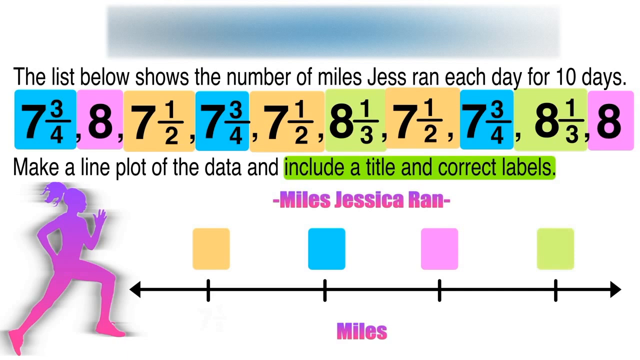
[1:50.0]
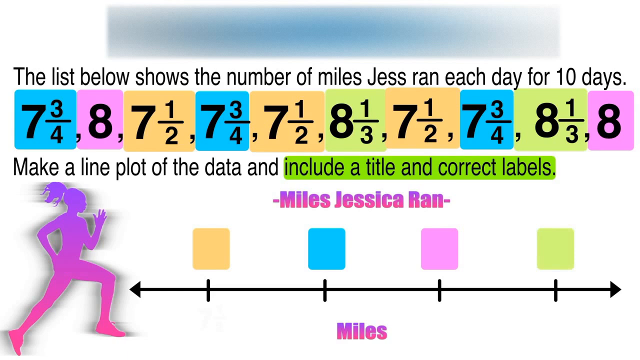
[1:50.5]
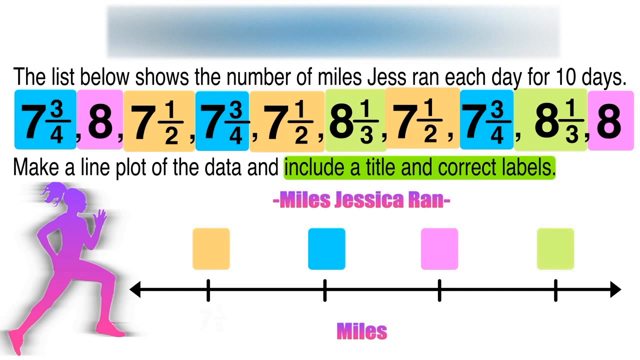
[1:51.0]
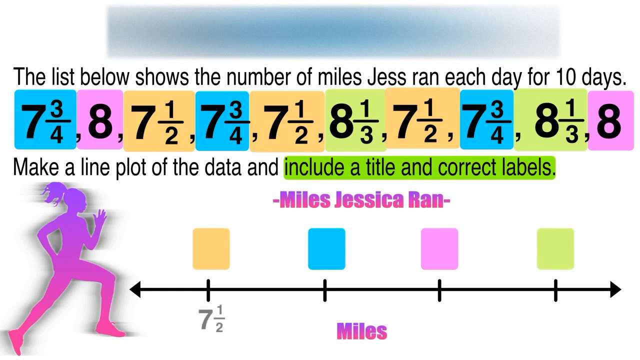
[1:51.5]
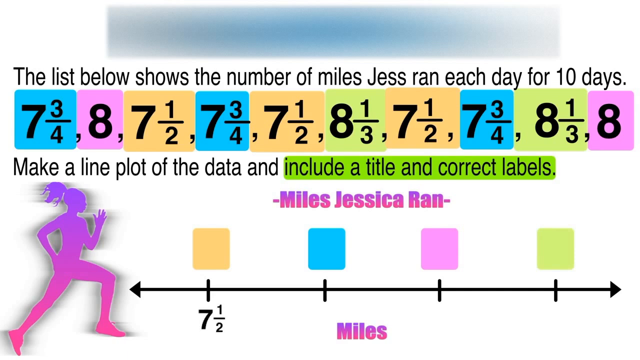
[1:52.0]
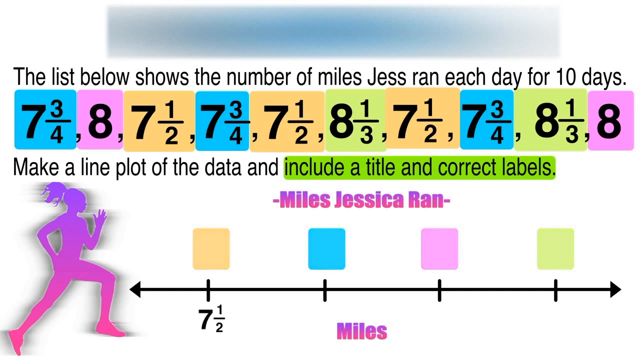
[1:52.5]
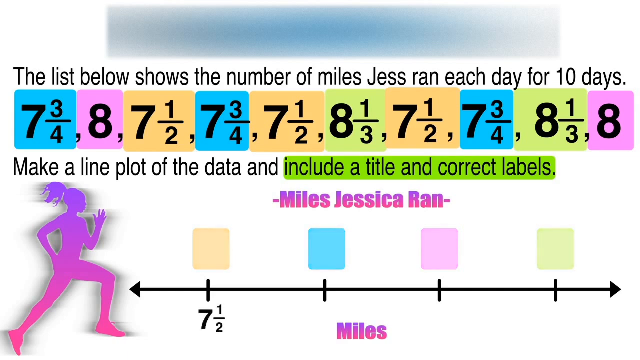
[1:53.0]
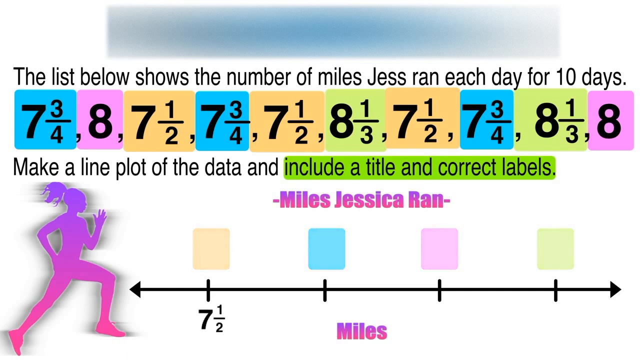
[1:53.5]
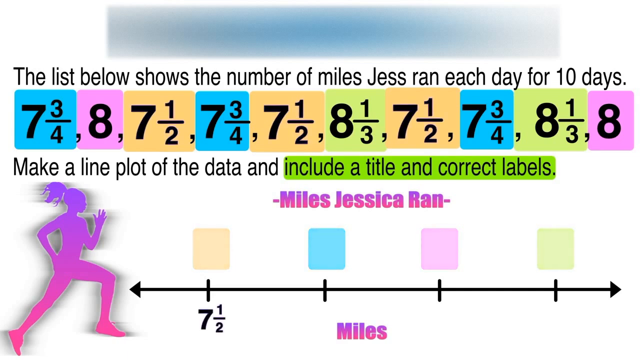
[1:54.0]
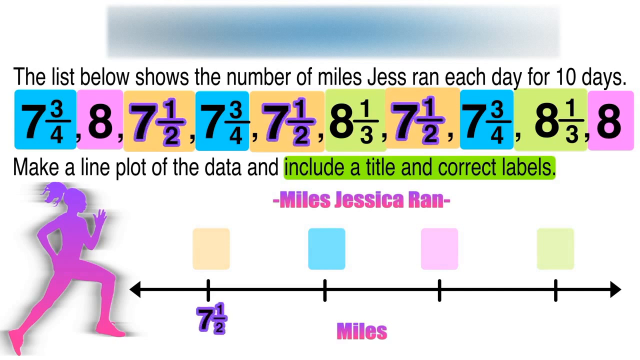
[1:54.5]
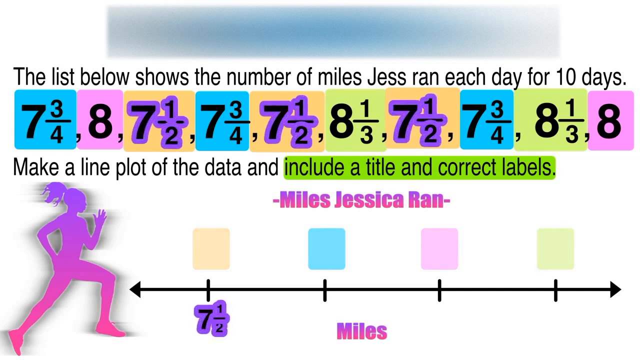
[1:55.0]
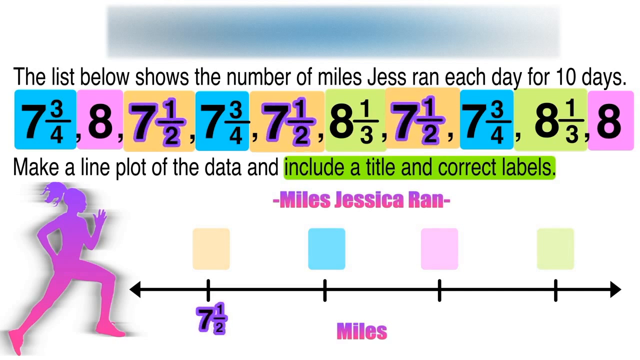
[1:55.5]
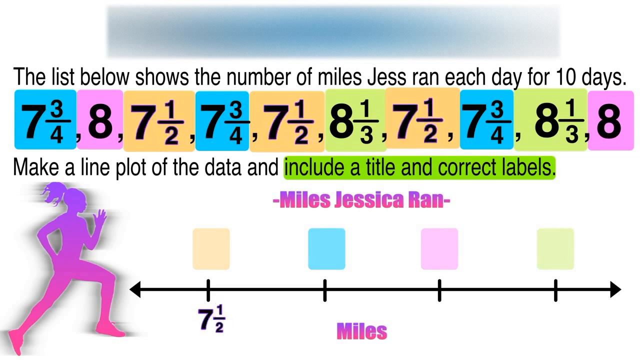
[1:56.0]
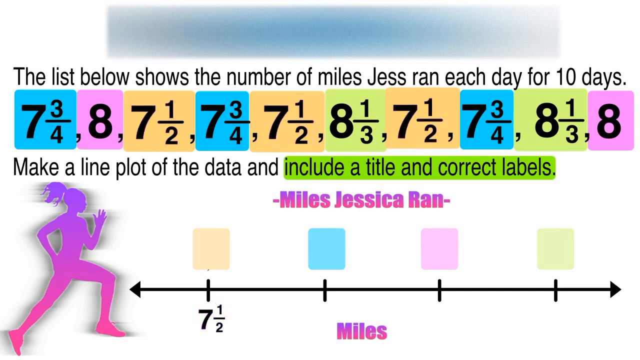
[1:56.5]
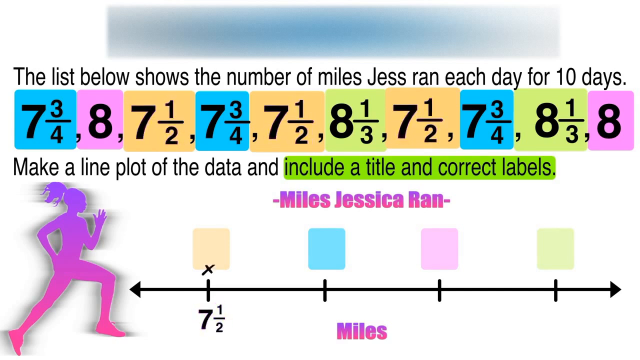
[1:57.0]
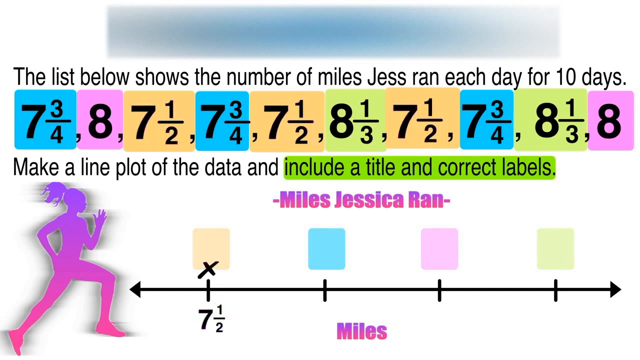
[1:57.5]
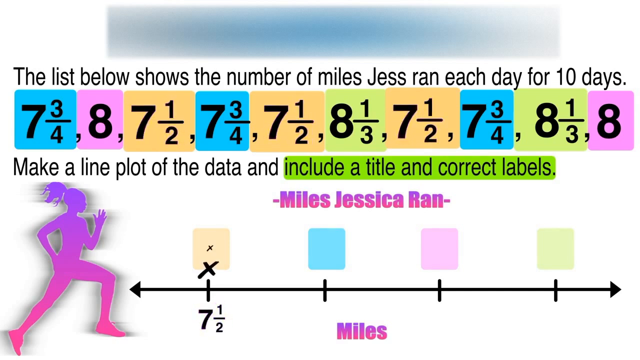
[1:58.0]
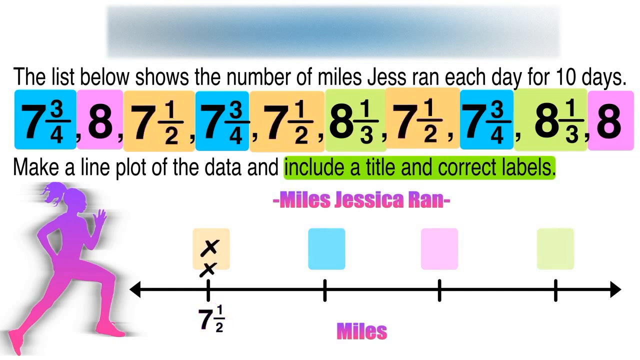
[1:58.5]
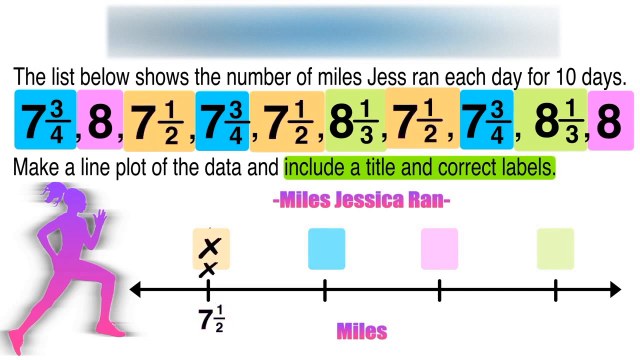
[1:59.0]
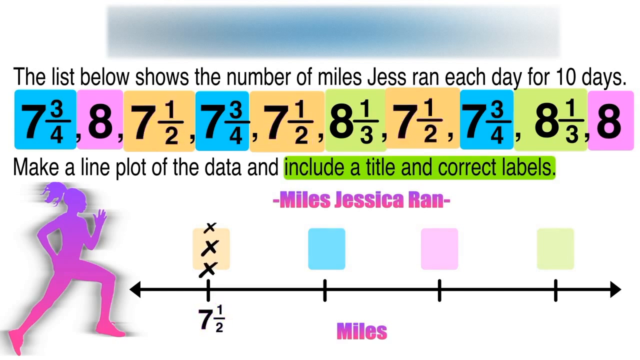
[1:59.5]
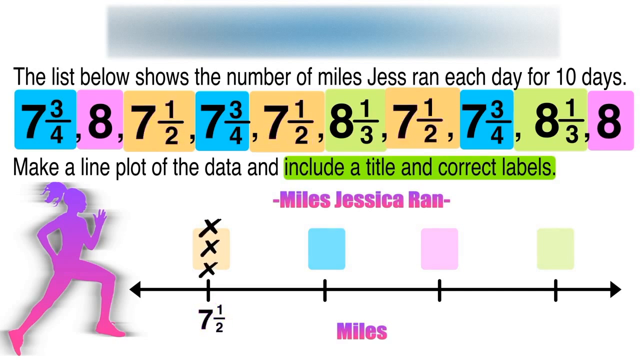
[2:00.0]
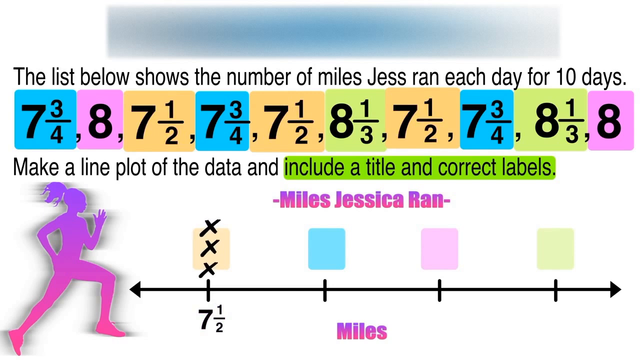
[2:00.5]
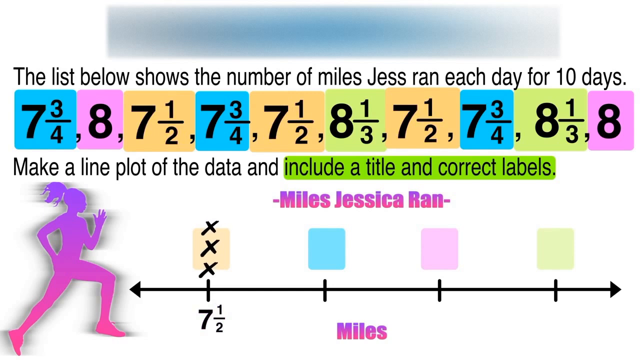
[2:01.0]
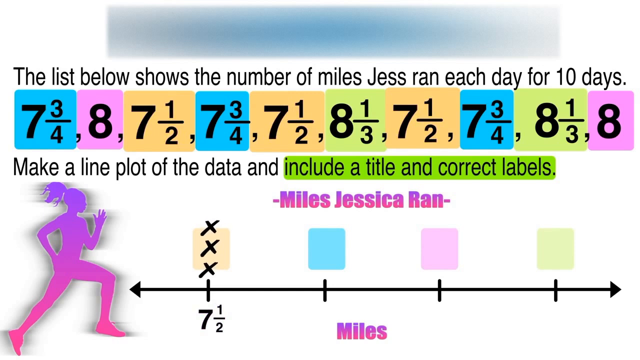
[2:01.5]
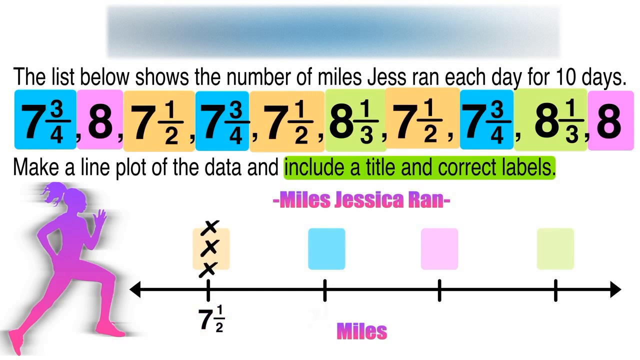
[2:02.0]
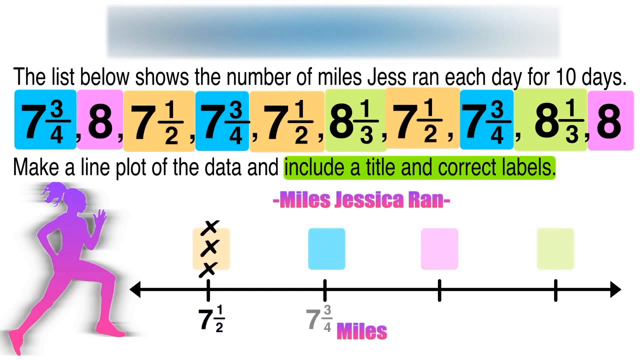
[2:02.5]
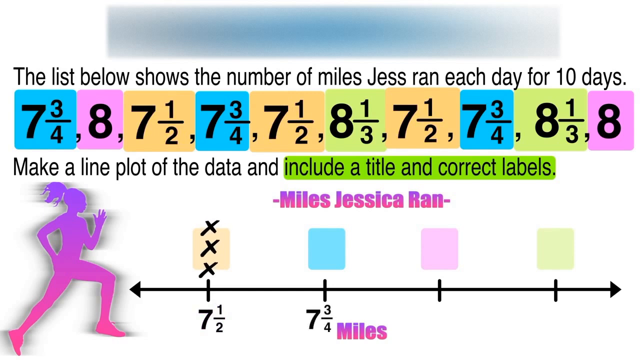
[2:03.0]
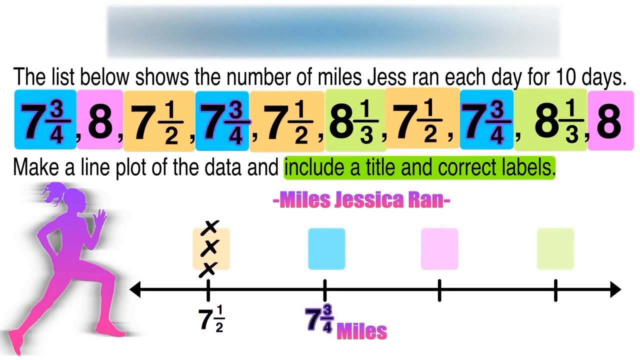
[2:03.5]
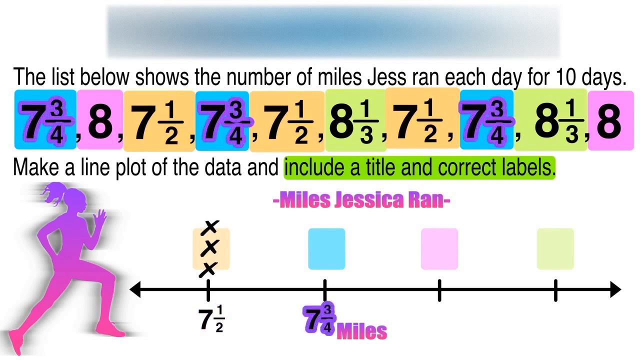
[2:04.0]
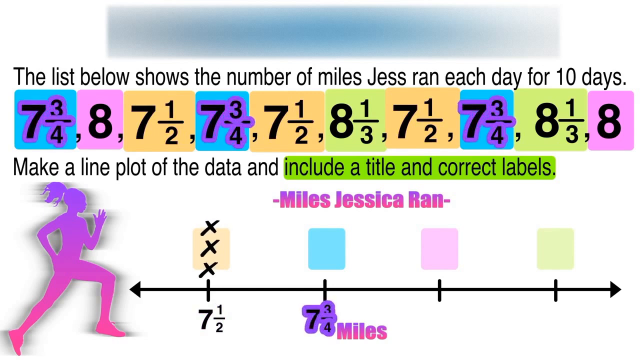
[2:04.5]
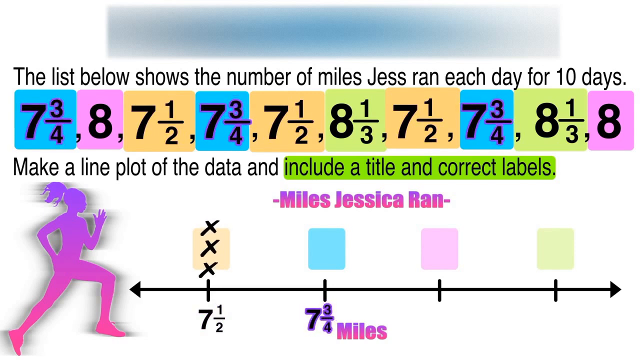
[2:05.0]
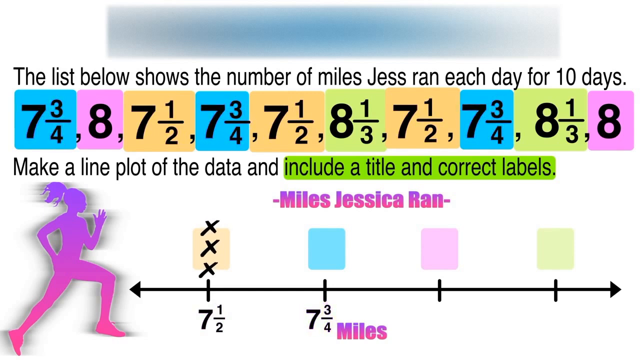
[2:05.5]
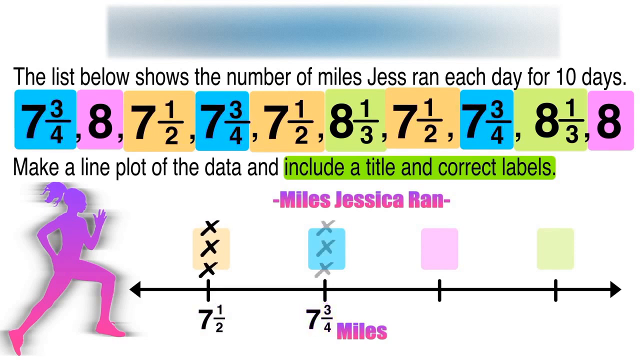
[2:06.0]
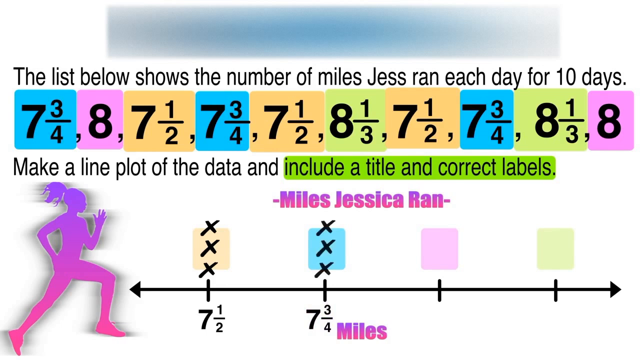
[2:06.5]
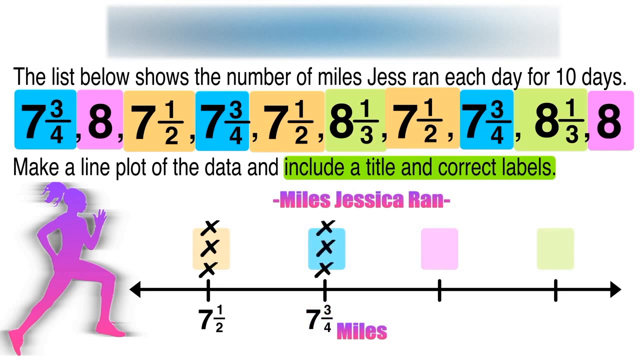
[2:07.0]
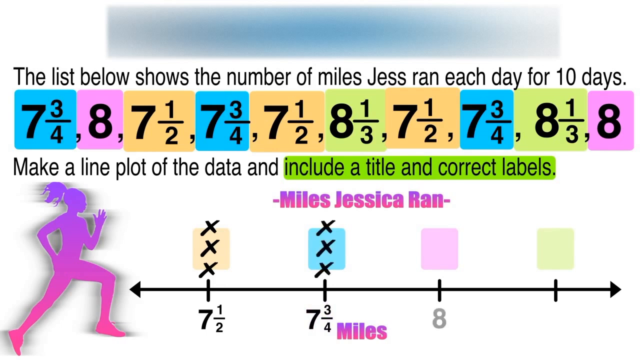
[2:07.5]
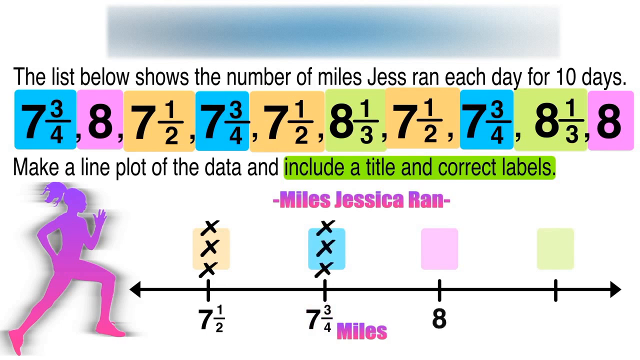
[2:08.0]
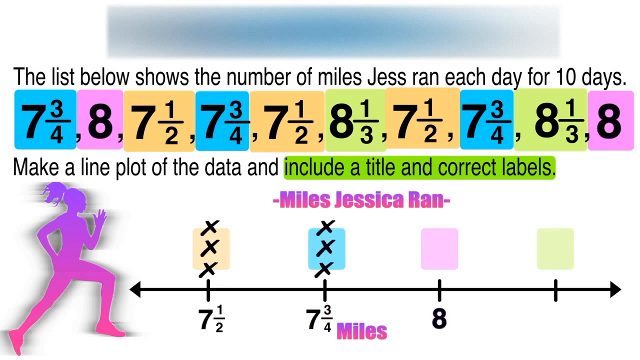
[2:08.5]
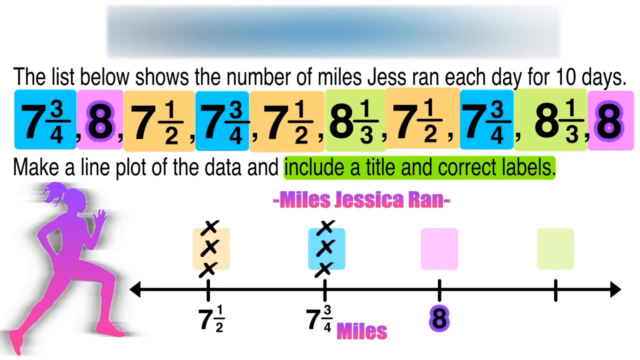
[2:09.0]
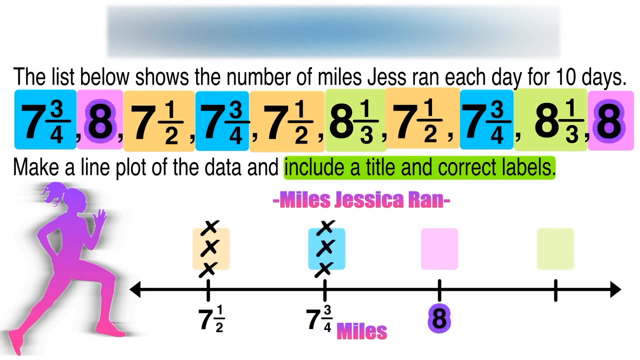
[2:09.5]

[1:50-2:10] The number line gets filled in with numbers. The first number on the left is 7 1/2, represented by orange. All of the 7 1/2s in the question then get a purple highlight around them, including the one on the number line, and an X appears over the orange square on the number line three times, matching how many times 7 1/2 appears in the question. The second number is 7 3/4; every 7 3/4 in the question and on the number line gets a purple outline, and three black Xs appear on the blue box, matching how many times that number appears. The next number is 8, which also gets highlighted in purple.